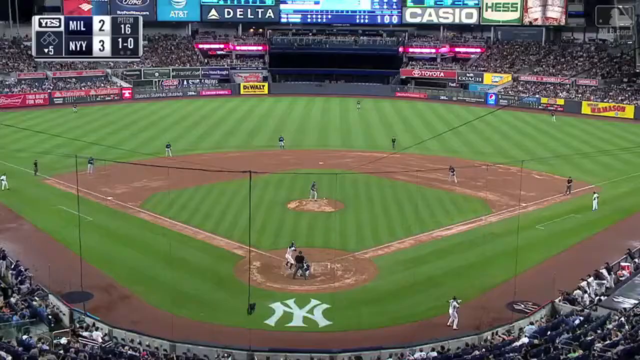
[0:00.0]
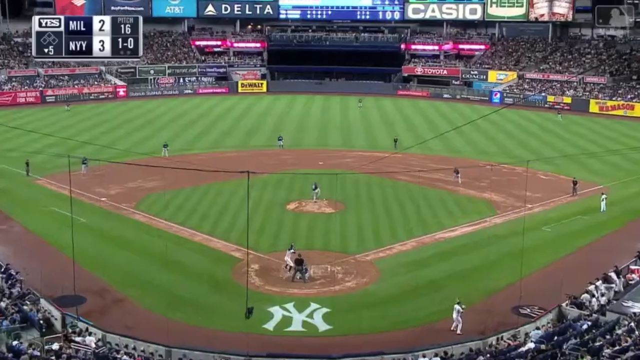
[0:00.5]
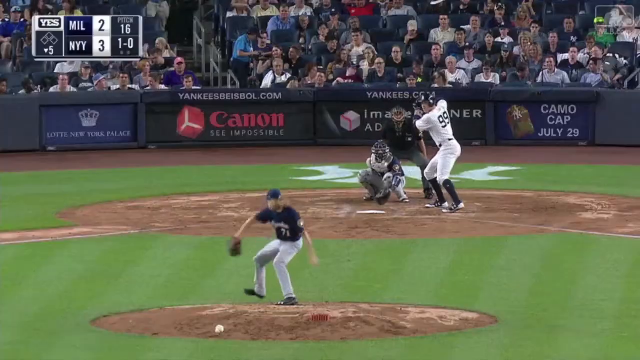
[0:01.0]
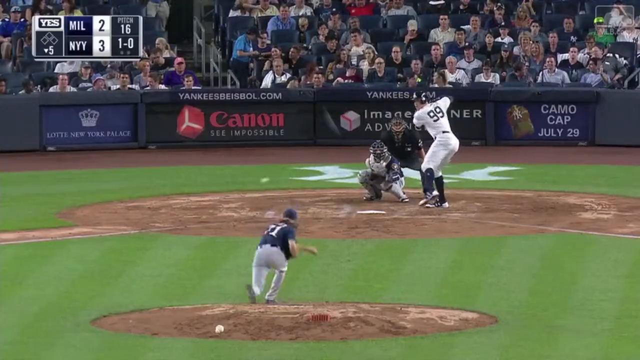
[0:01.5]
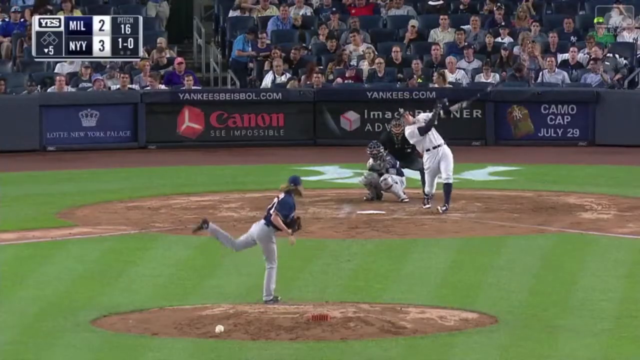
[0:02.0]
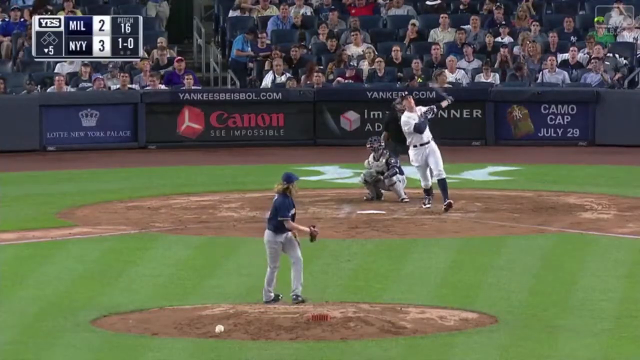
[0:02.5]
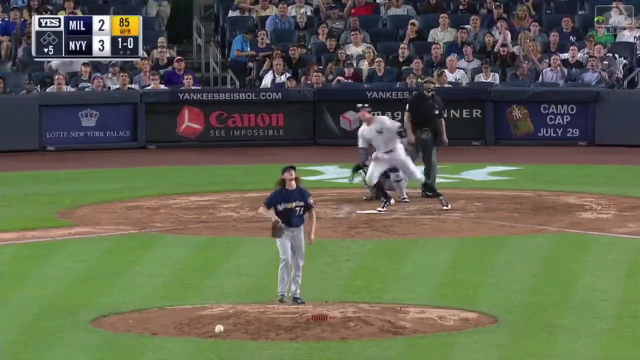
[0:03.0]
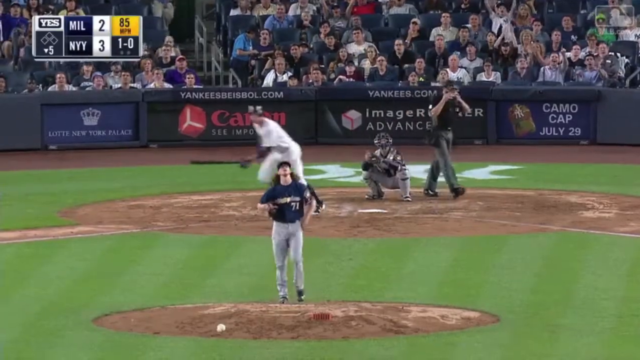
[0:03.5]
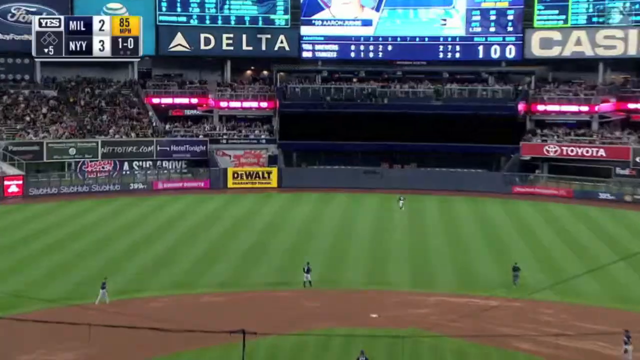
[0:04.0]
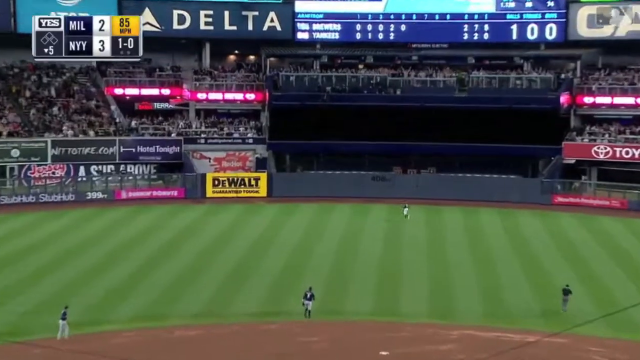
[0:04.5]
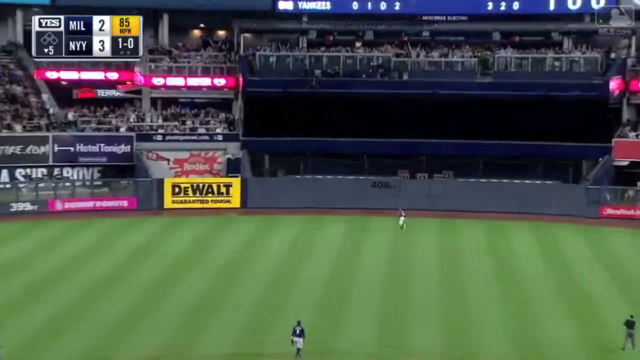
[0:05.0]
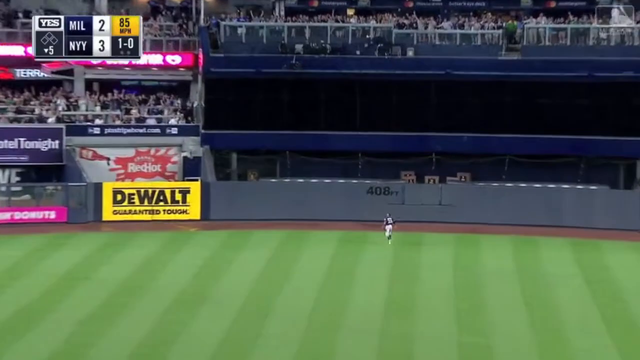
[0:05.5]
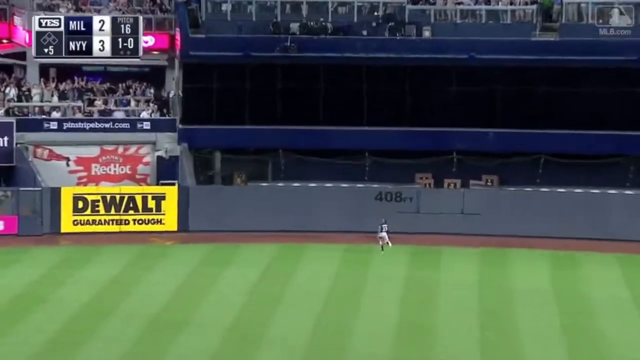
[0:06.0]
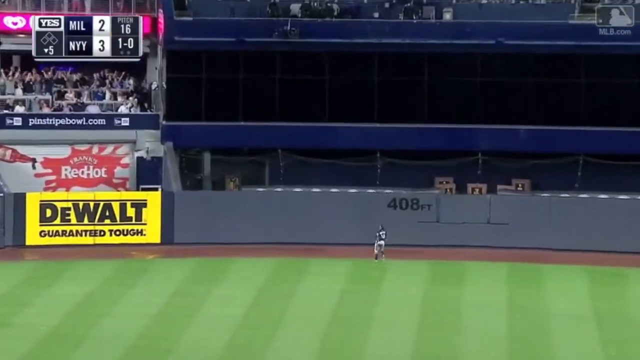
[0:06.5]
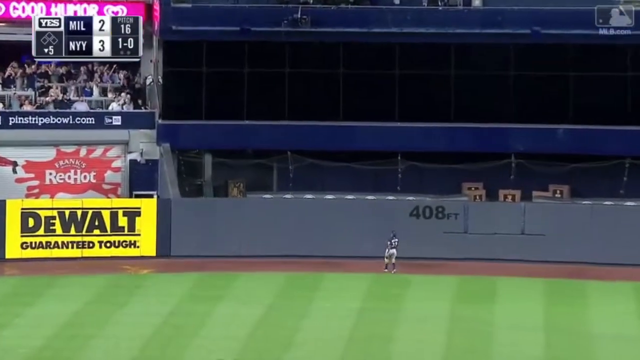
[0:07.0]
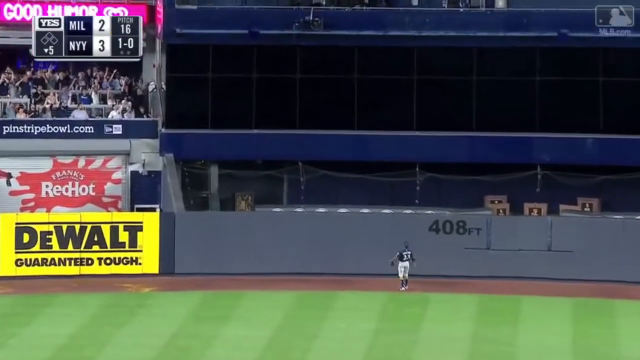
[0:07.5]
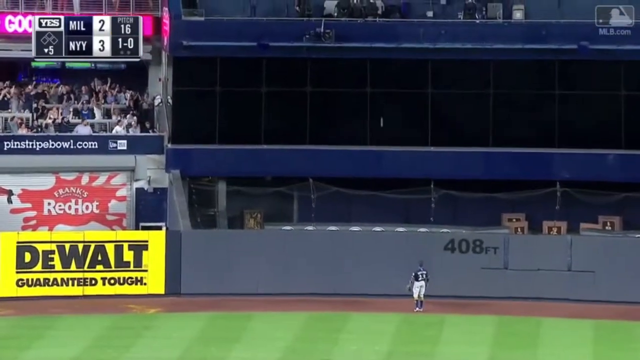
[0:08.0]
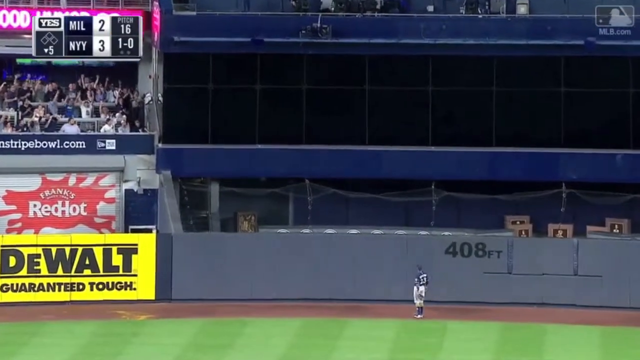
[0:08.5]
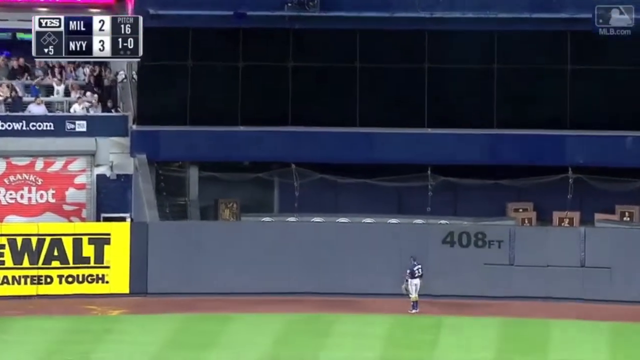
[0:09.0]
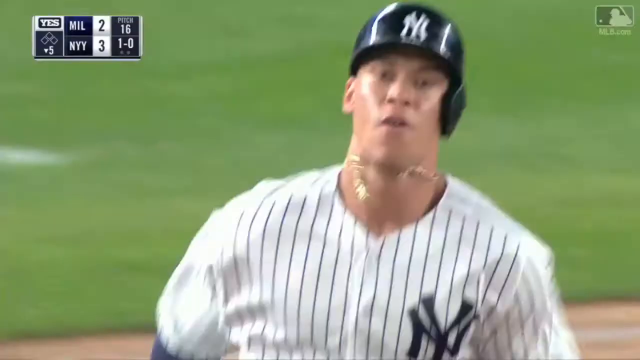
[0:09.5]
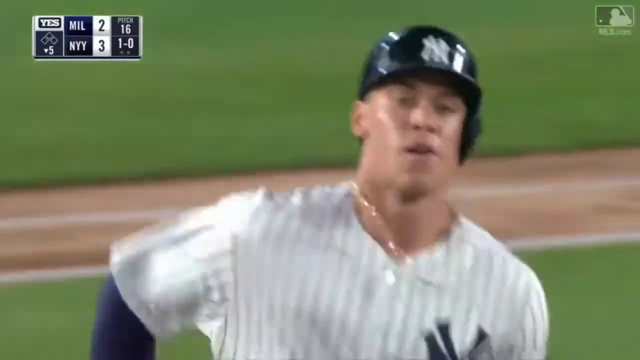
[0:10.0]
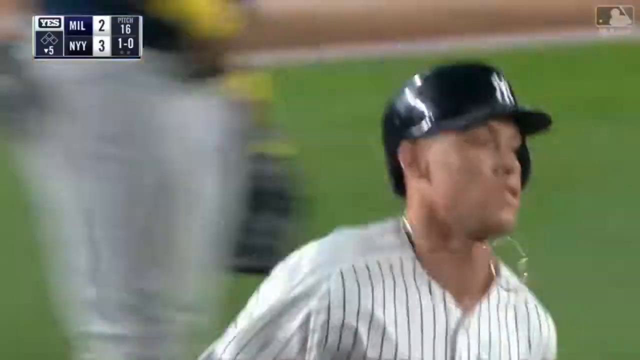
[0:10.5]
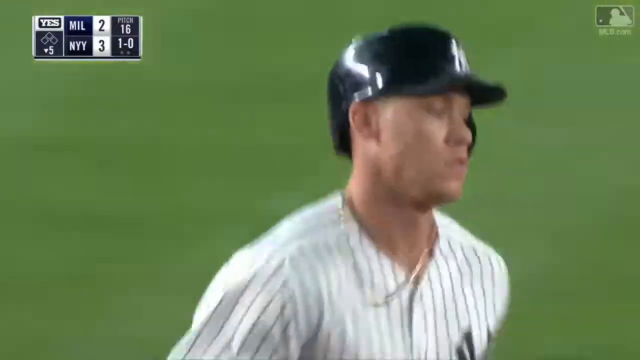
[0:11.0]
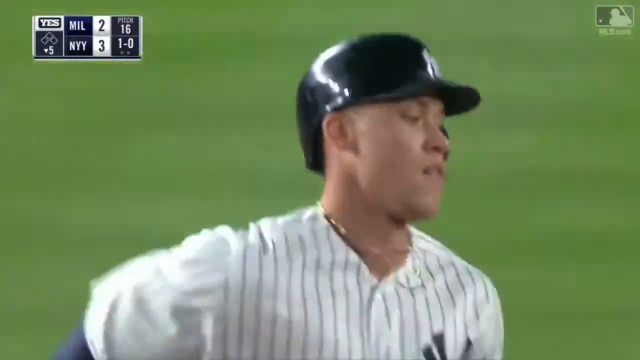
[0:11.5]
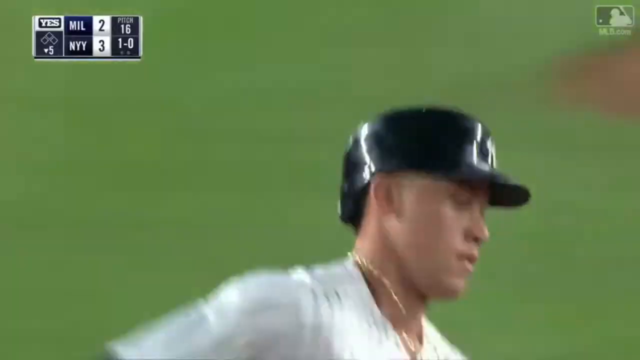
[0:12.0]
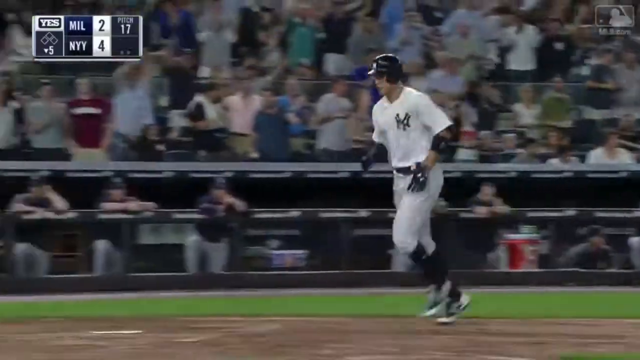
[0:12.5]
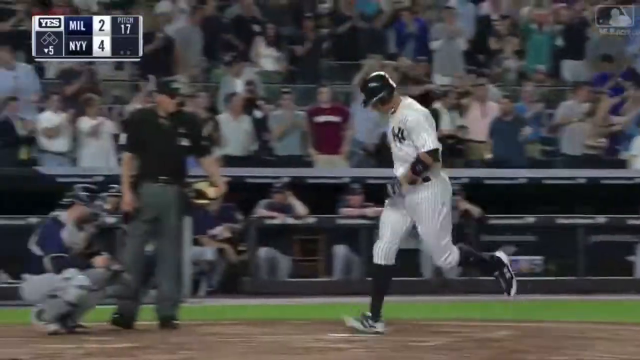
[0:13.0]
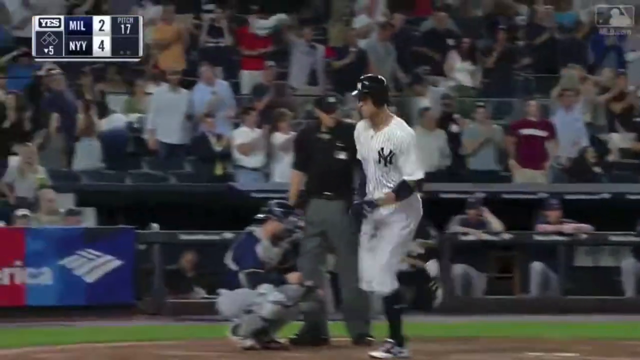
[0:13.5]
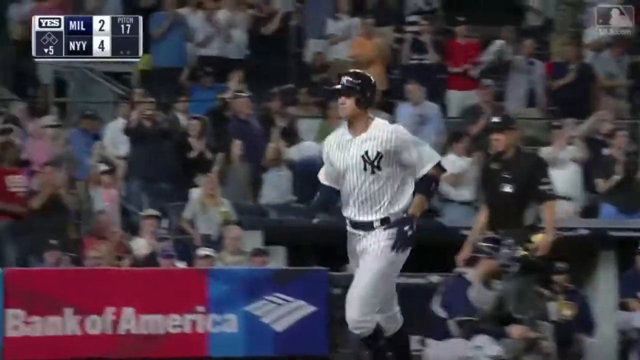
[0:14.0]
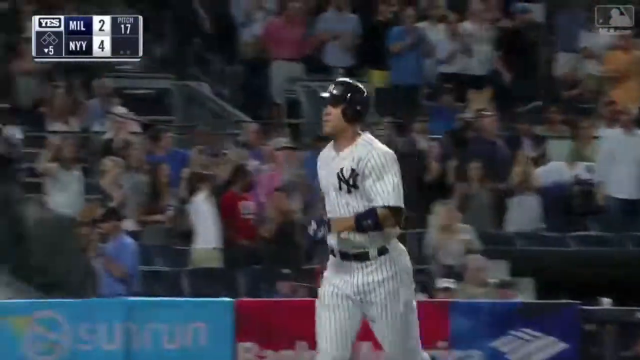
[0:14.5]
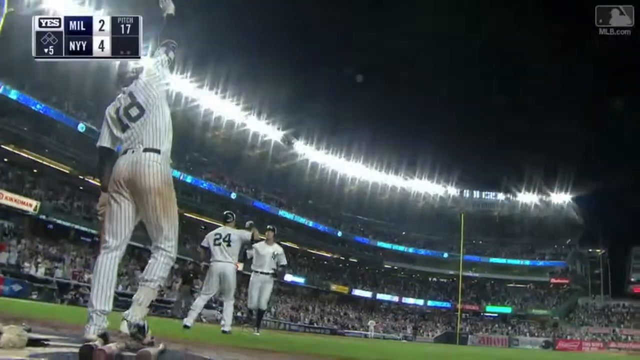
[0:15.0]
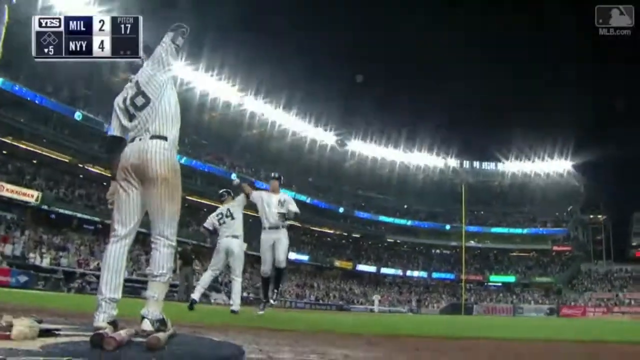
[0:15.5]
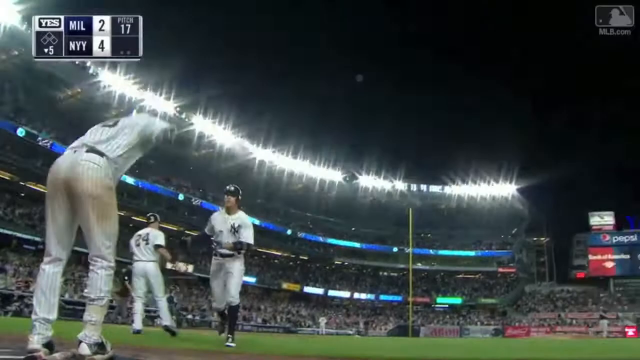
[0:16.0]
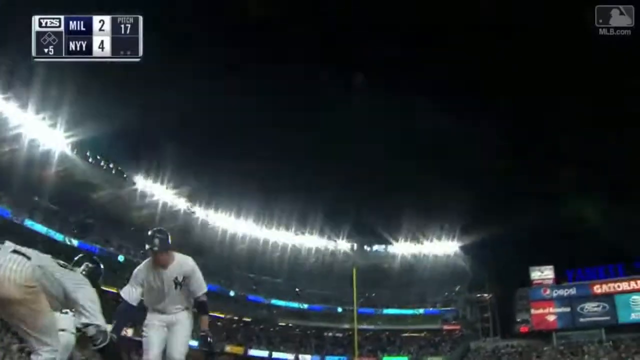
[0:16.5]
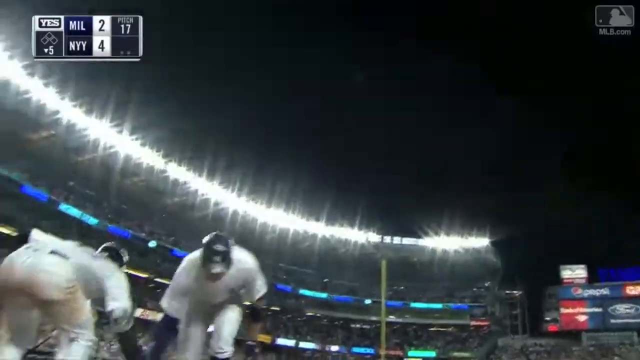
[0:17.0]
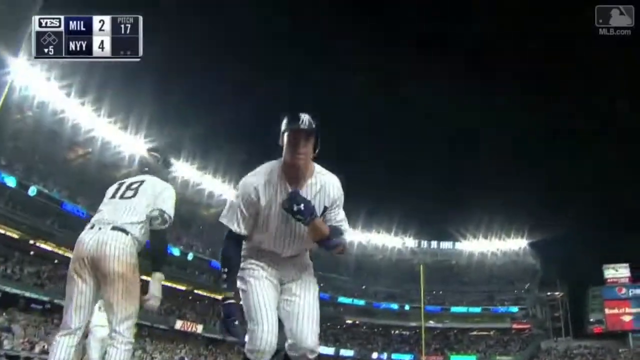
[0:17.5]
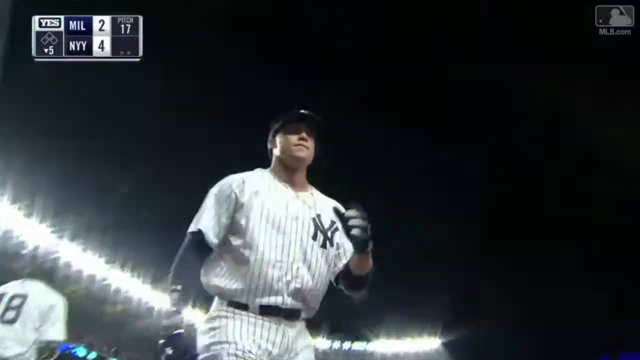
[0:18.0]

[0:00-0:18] Footage of a baseball game between Milwaukee and the Yankees, broadcast on Fox Sportsnet and played at Yankee Stadium. It begins with a wide shot of the full field, then closes in on the pitcher pitching and the batter swinging, followed by a shot of the ball going out of the park for a home run. The batter is then shown running around the bases. The home run puts the Yankees up four to two in the bottom of the fifth inning. Various ads are visible along the side of the field, such as for WB Mason, Casio, Hess and Staples.